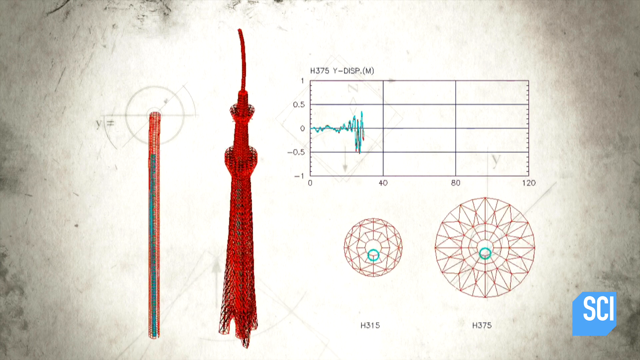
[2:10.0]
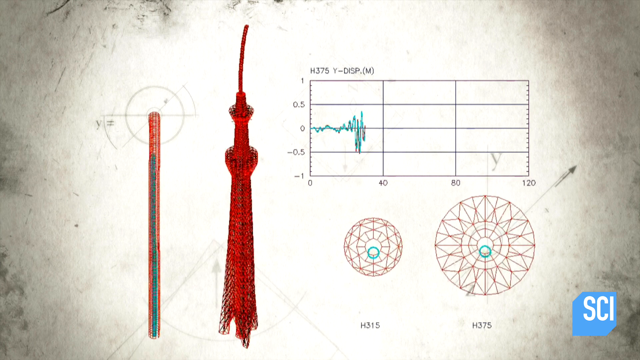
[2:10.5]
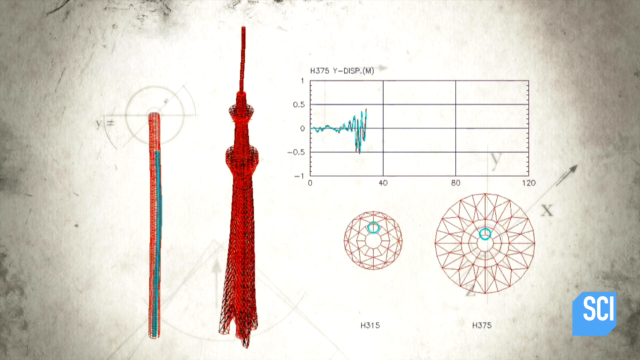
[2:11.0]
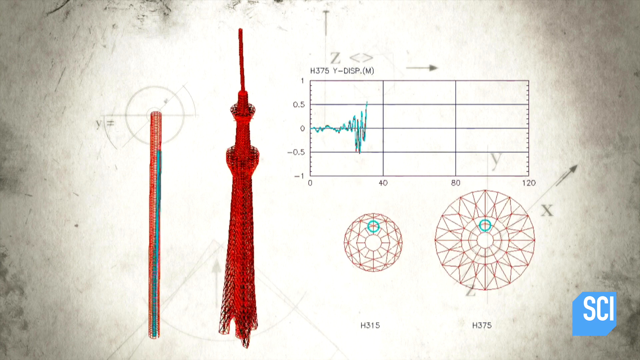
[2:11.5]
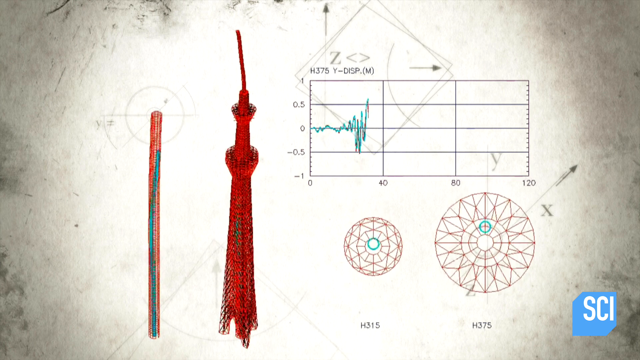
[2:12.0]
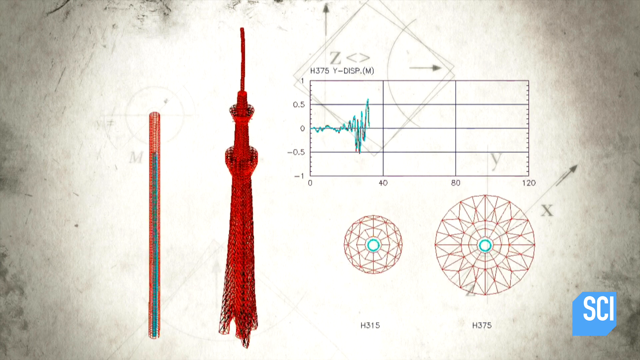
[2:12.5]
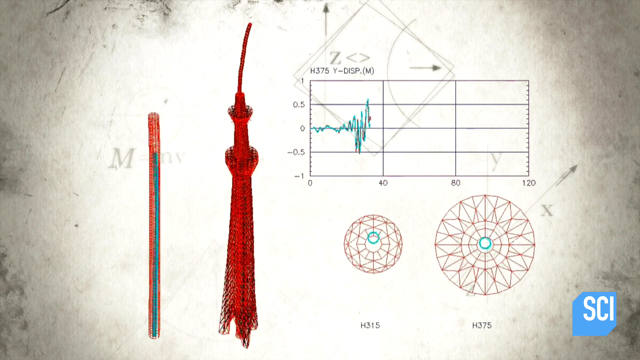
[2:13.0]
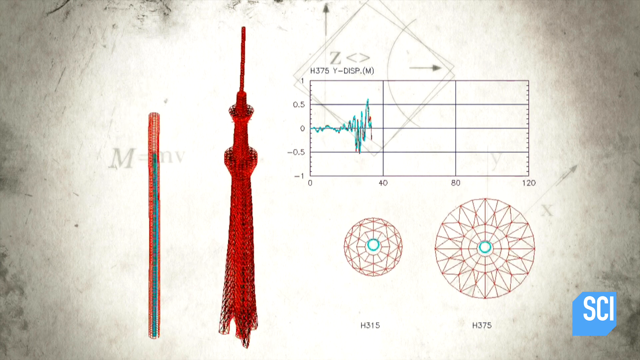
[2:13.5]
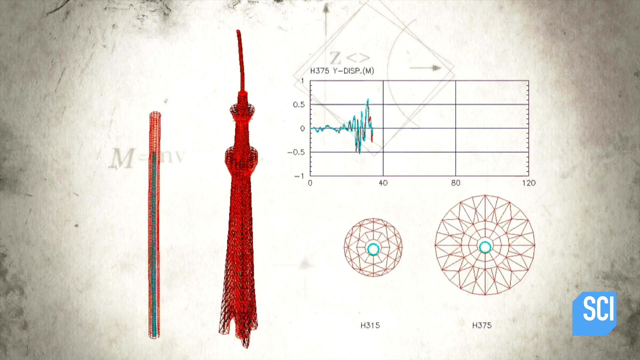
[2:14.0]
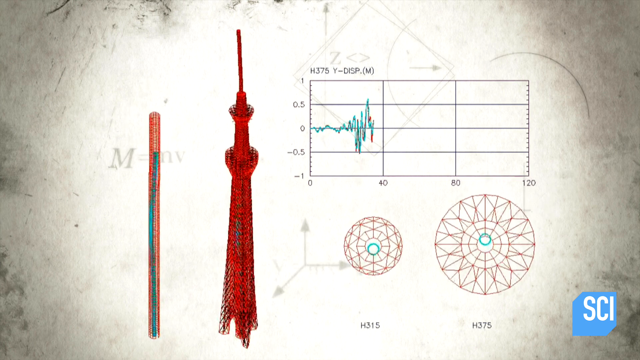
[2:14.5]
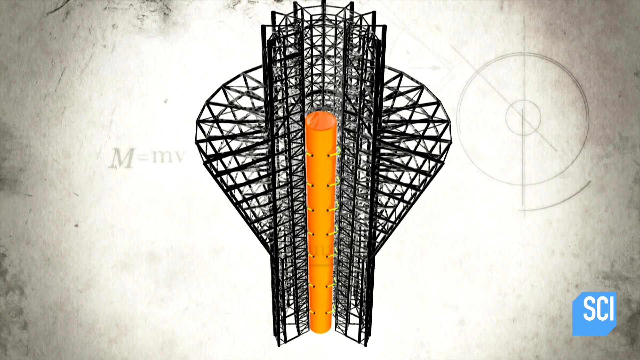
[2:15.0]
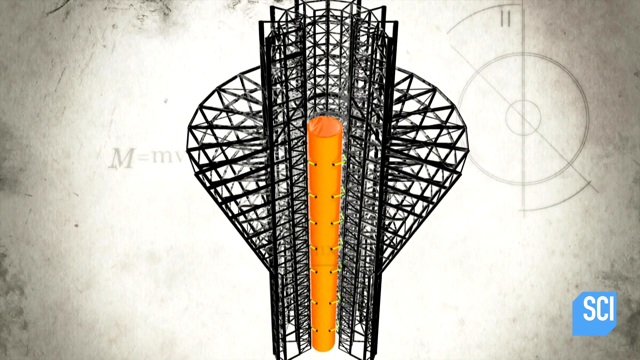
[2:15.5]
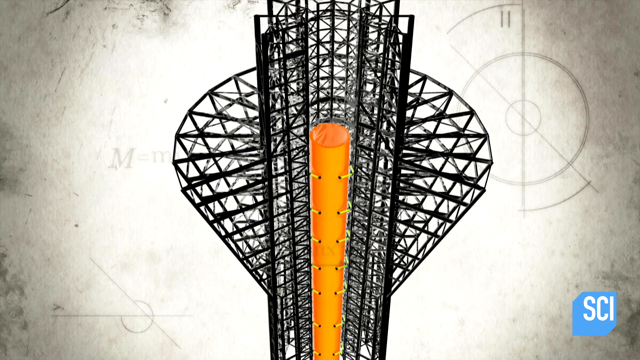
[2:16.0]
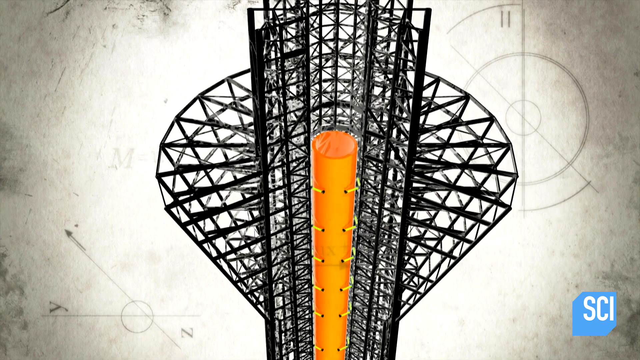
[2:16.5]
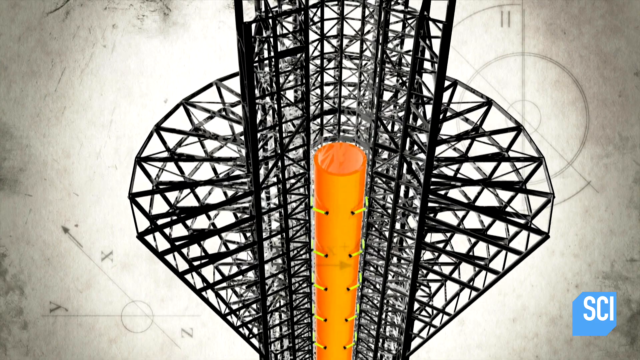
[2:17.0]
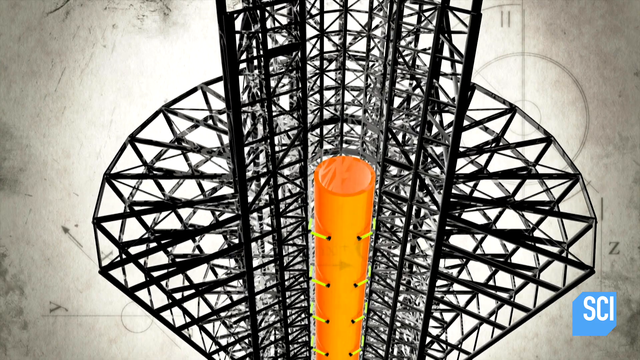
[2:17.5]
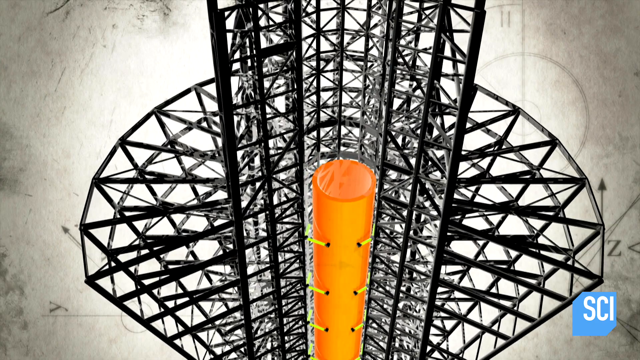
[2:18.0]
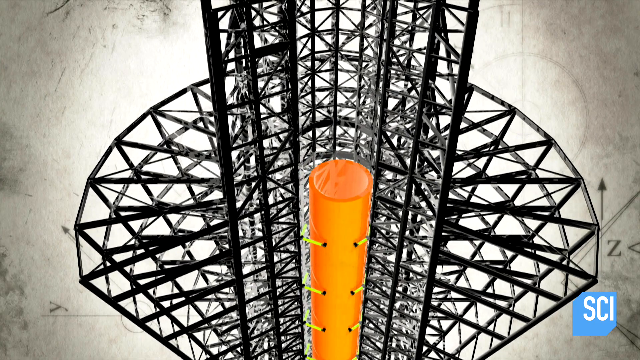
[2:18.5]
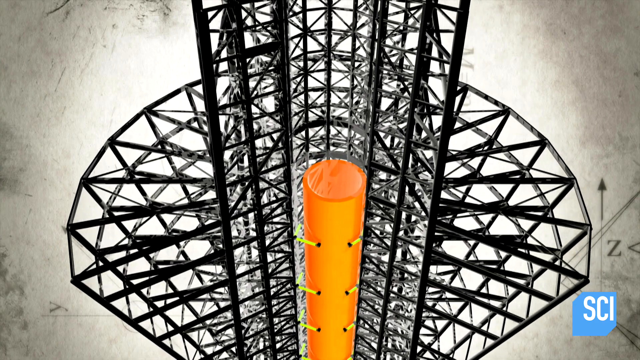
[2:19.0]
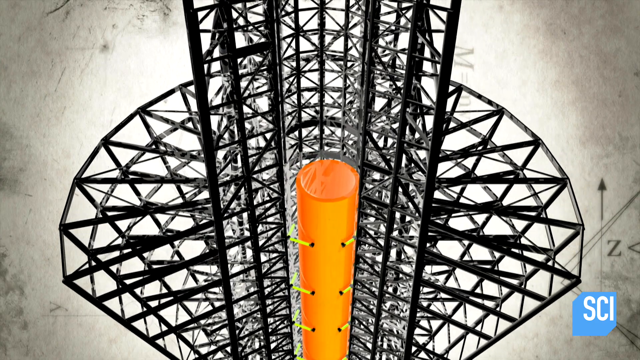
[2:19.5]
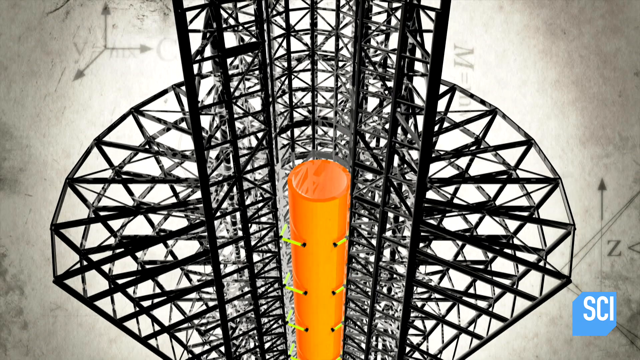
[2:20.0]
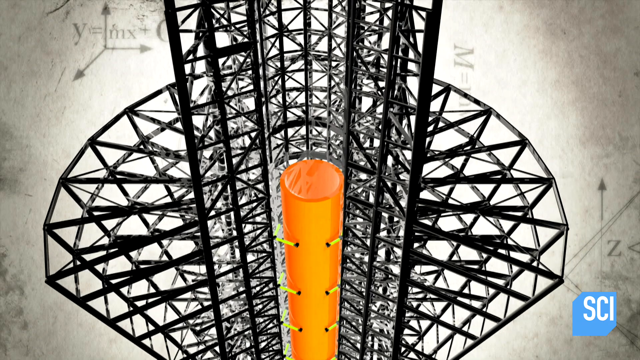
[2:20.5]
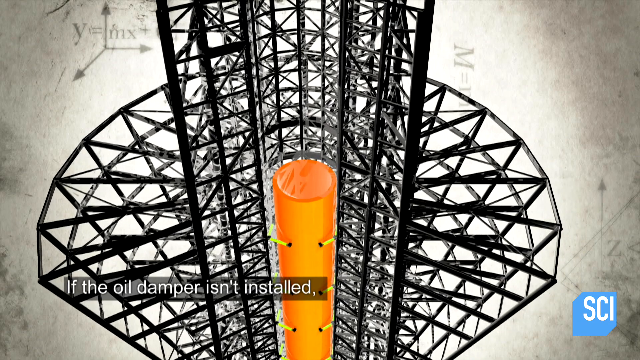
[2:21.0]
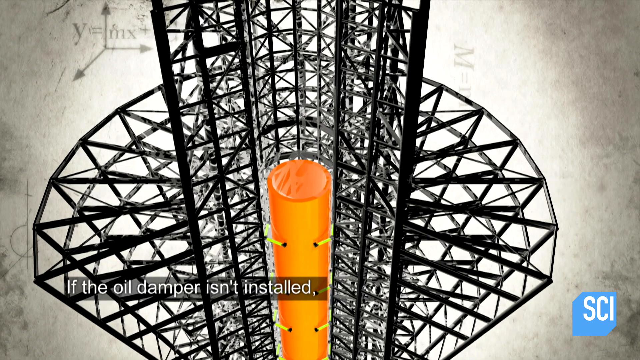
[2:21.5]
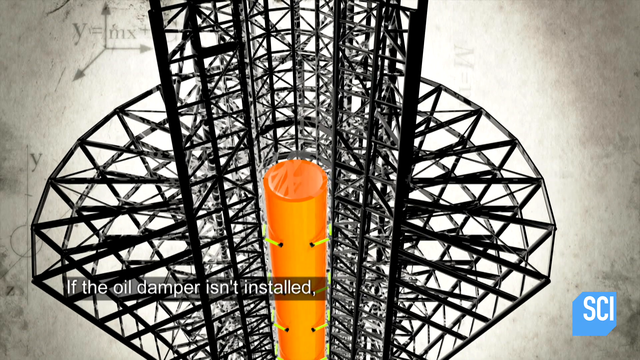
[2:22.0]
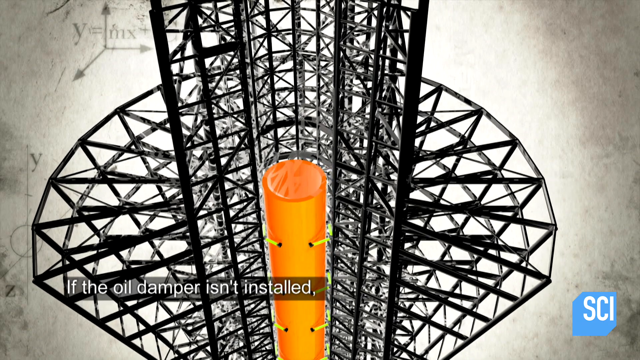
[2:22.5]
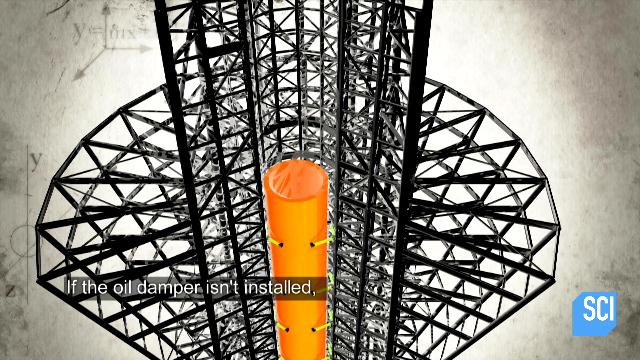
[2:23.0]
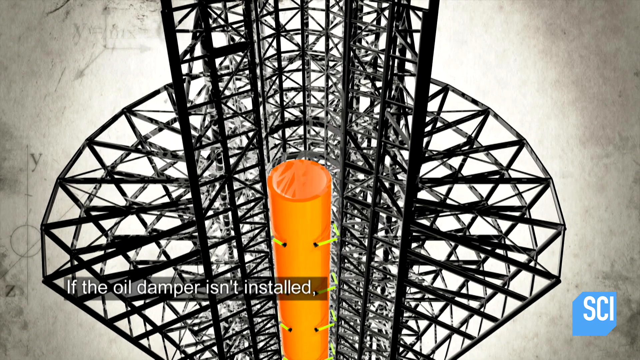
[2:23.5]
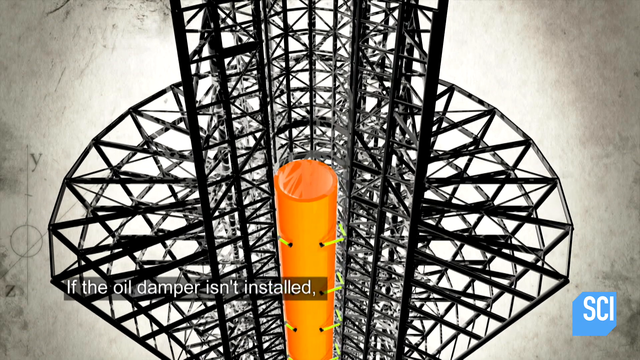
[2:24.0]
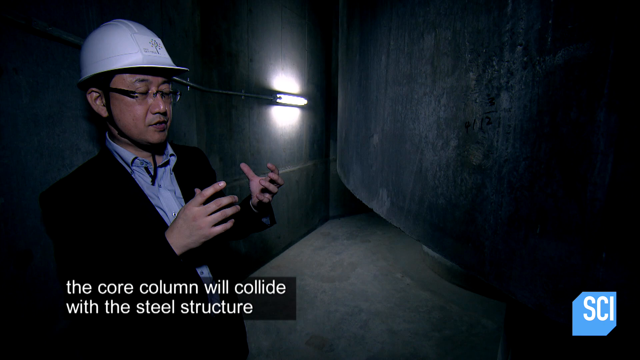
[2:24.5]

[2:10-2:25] A blueprint shows the structure, with the Sky tree in red to indicate that it is shaking. Next to it is some grass that shows how much movement there is. A couple of diagrams appear, apparently labeled "H315" and "H375", showing the overall shaking of the structure. The view then shows the inside of the core, highlighted in orange.